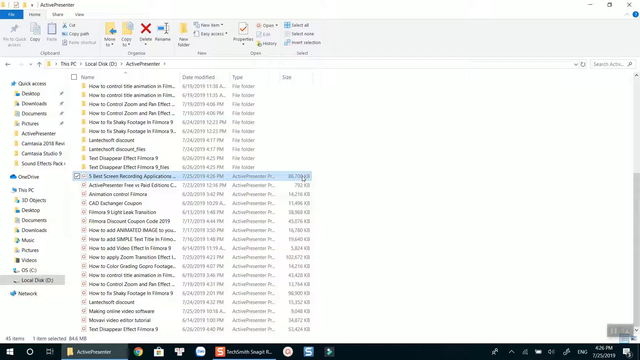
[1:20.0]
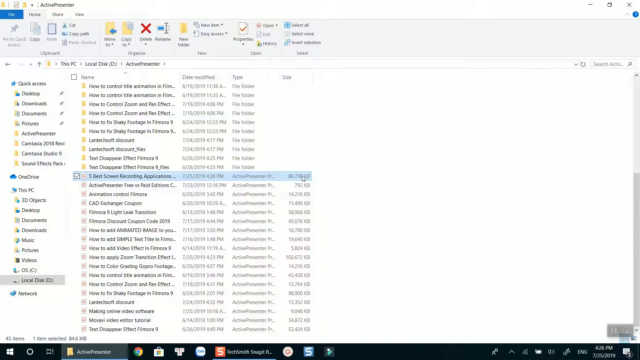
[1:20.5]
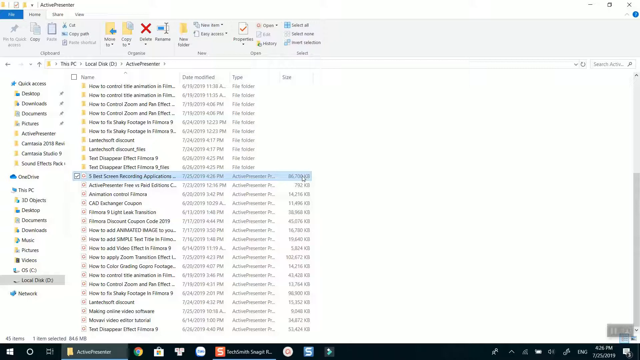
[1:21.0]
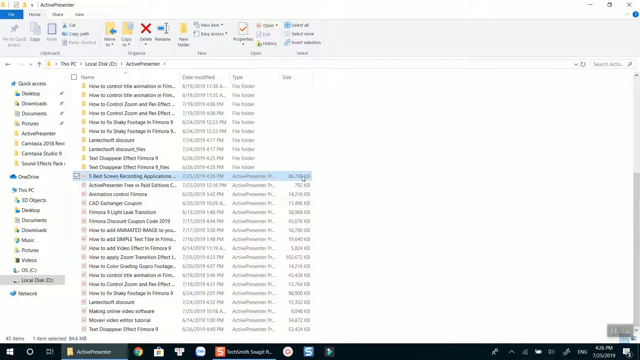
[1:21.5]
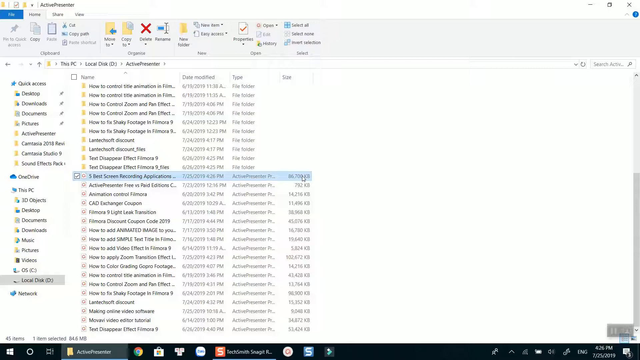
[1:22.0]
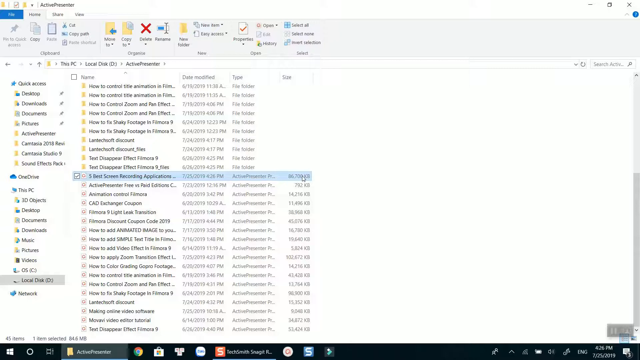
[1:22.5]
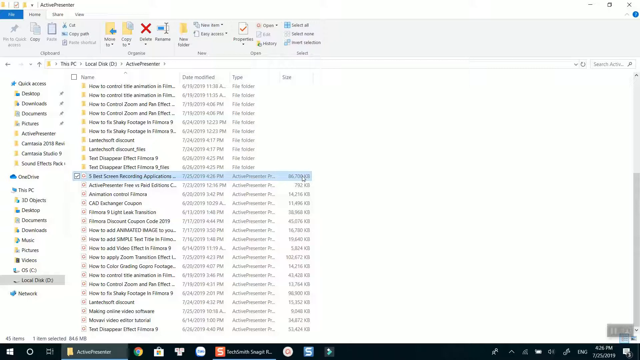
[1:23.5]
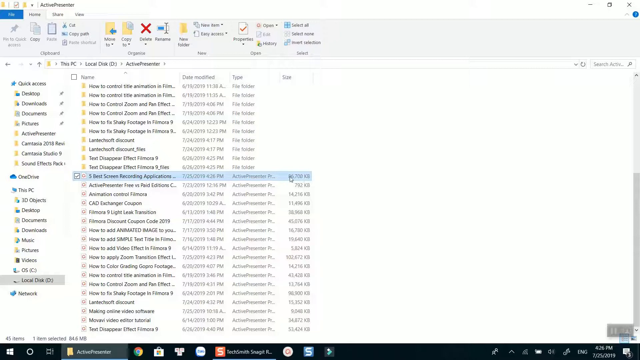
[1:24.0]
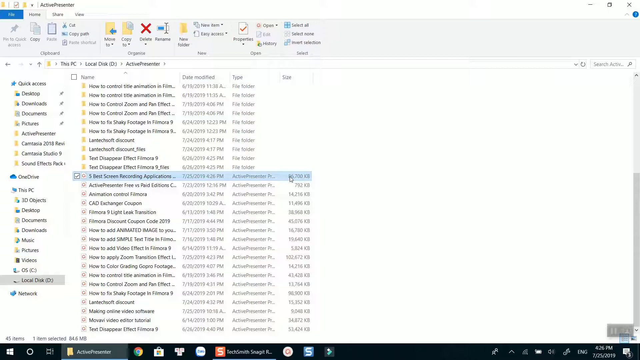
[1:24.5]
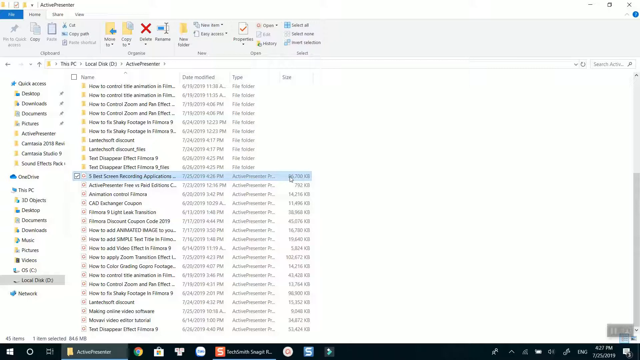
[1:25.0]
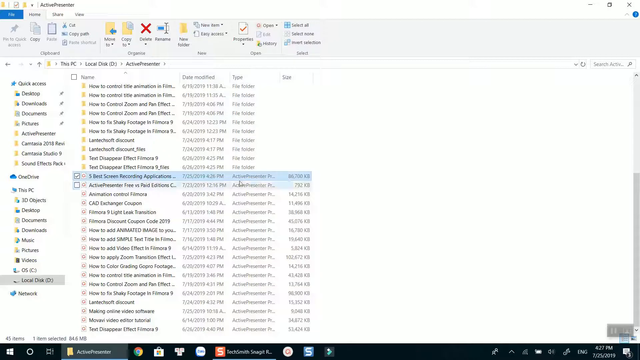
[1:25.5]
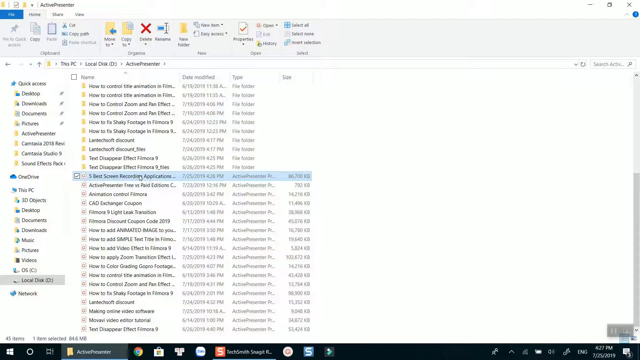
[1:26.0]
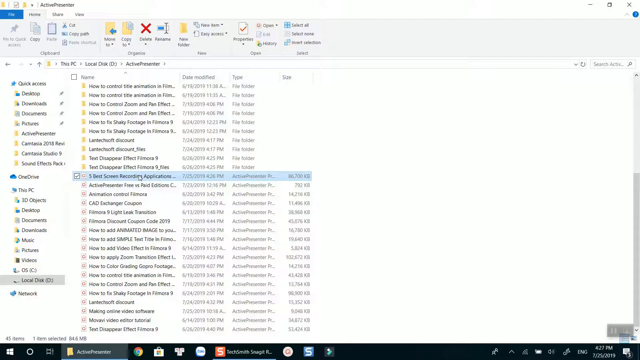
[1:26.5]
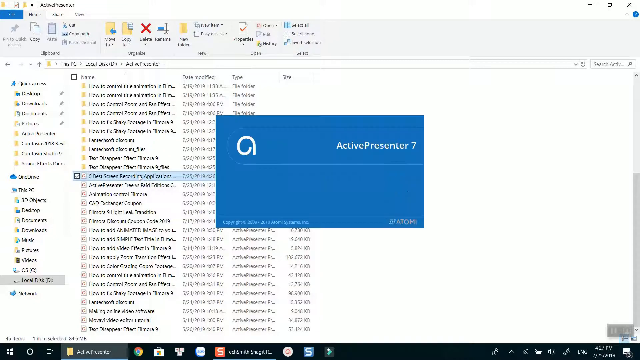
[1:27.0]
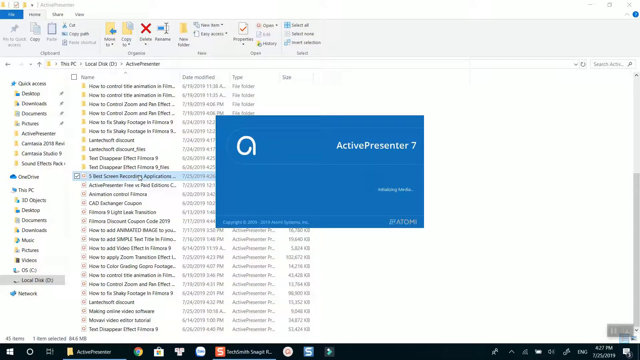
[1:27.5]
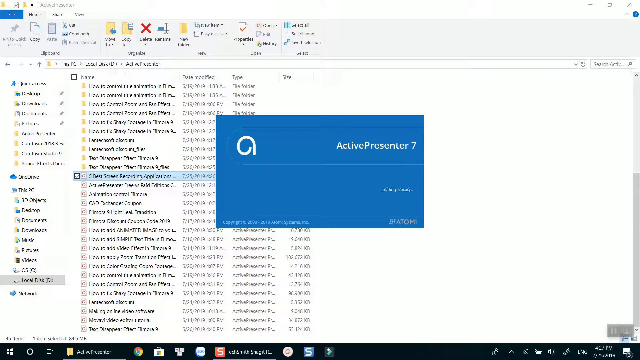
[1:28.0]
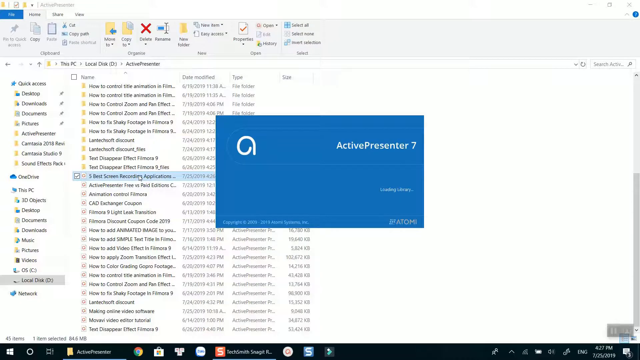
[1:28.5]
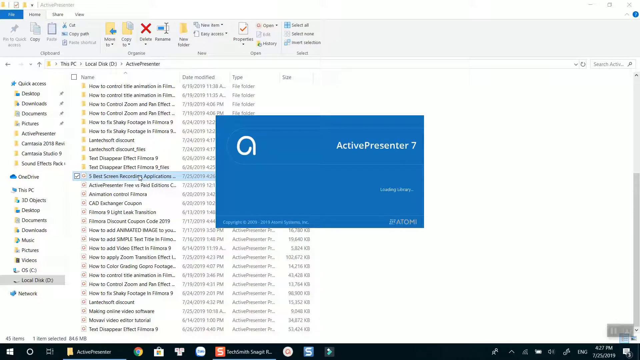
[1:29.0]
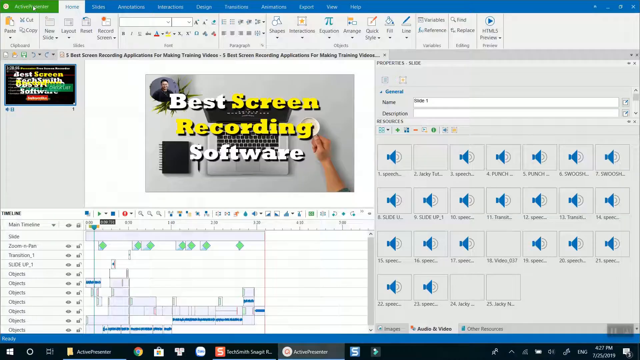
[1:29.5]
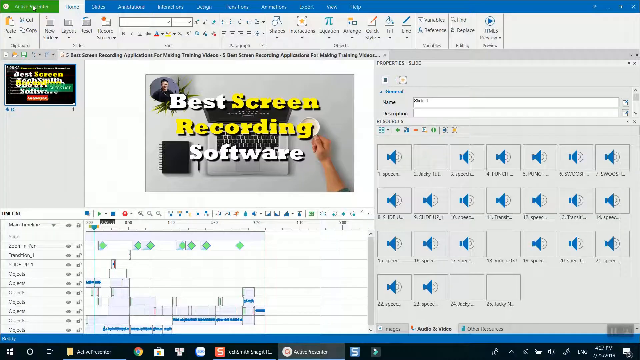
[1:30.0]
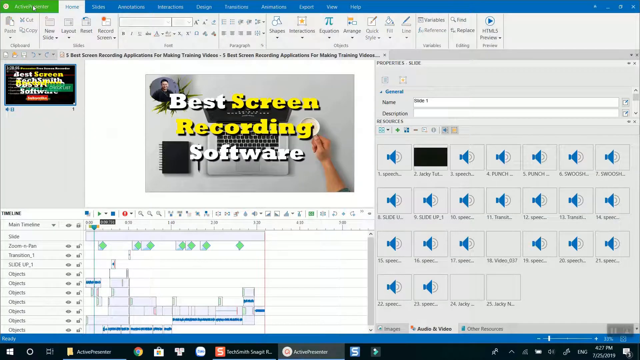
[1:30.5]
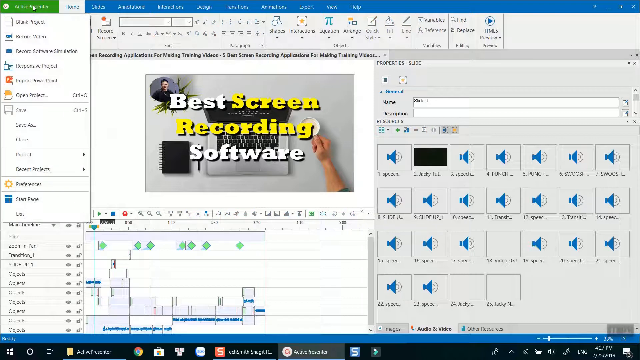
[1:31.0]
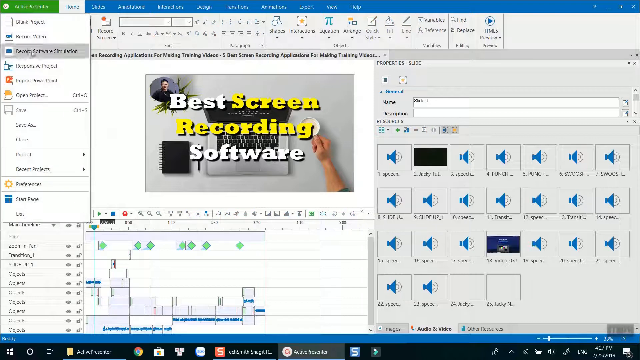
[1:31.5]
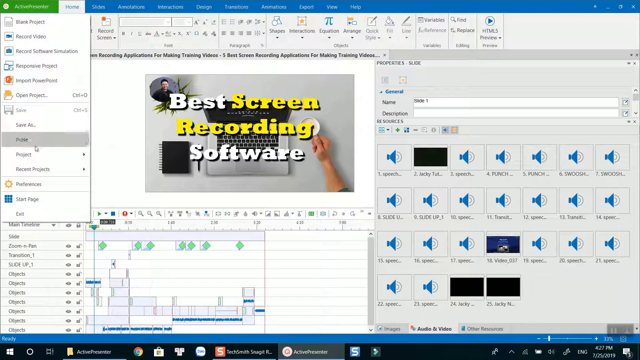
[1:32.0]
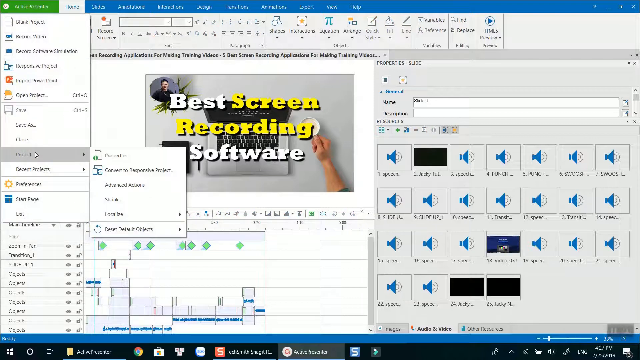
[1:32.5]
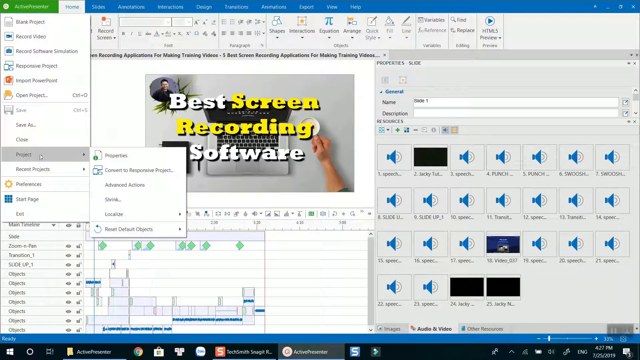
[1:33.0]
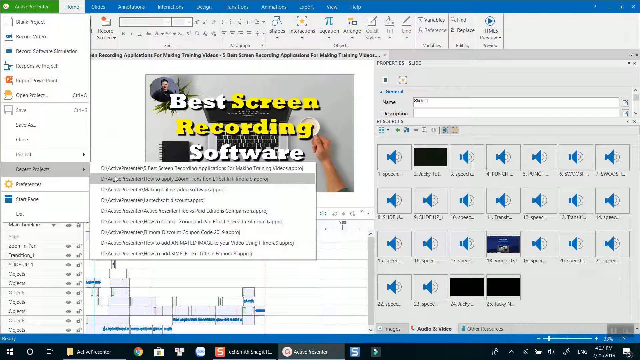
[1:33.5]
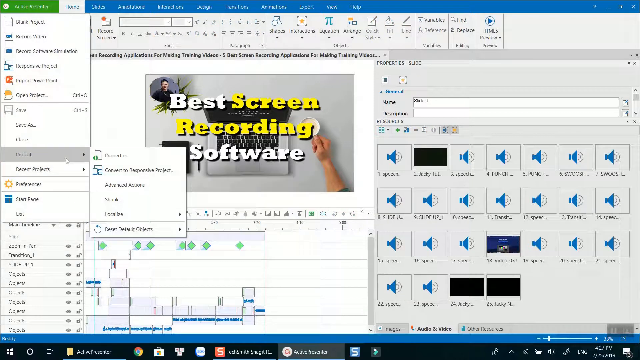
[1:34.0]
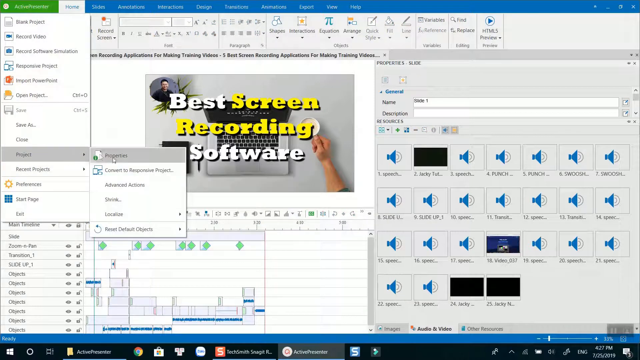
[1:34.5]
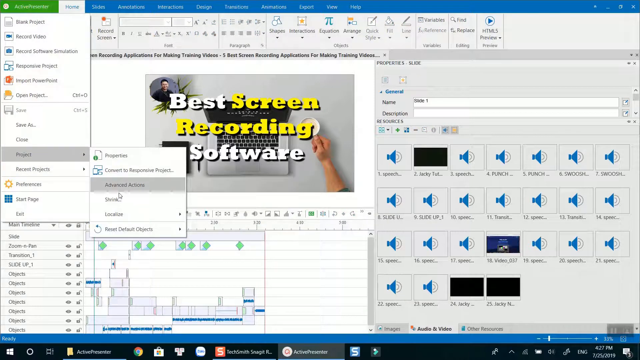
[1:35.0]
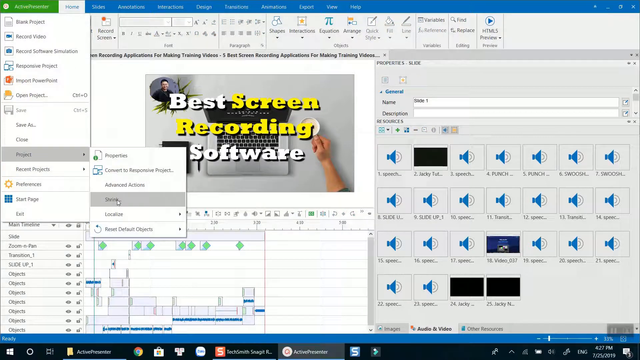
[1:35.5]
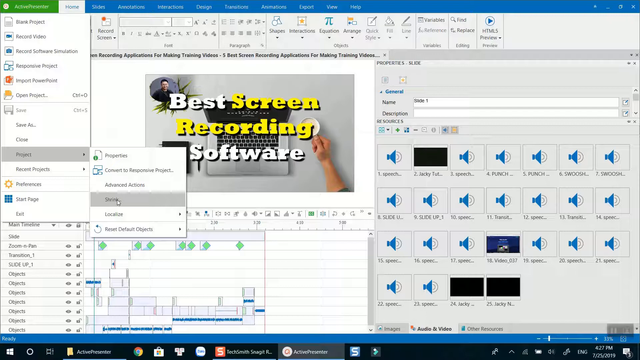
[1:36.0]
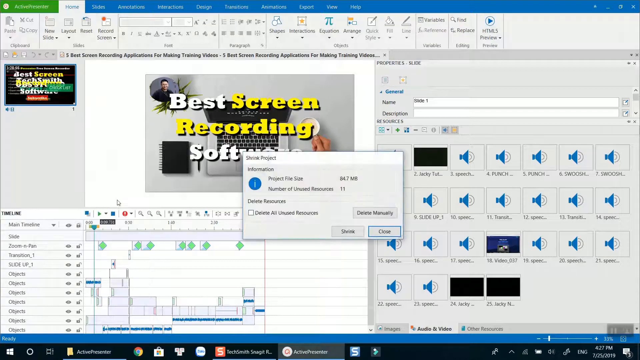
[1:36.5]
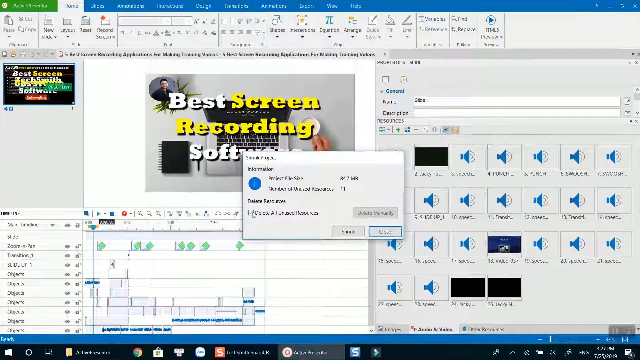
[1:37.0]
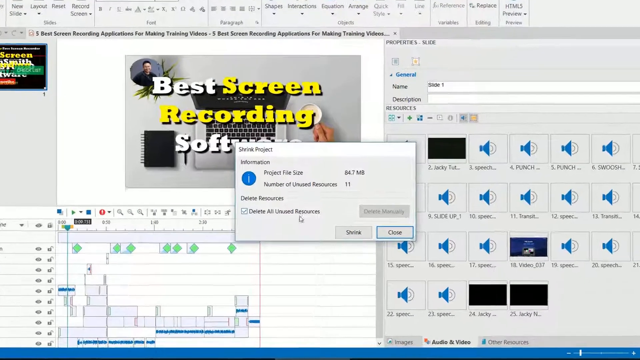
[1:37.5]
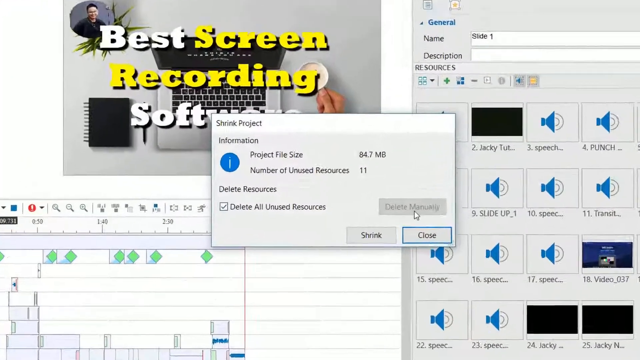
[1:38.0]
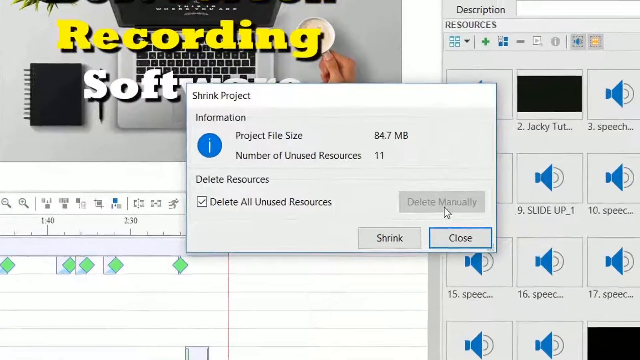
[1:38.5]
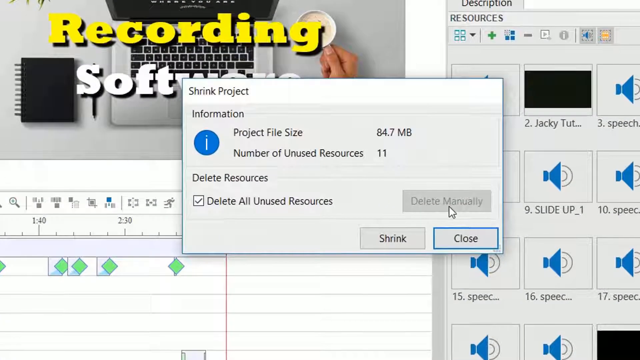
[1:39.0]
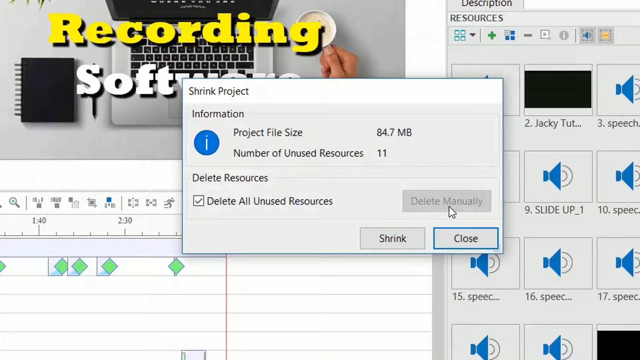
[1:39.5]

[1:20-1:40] The view returns to the file system on the local disk, where the person clicks on "five best screen recording applications," which opens Active Presenter 7. Back in the editing software, he selects Active Presenter at the top left, moves to Import PowerPoint without clicking it, moves down to Project, and clicks Shrink Project. A small window appears reading "shrink project," with "information" below it, "project file size, 84.7 megabyte," and a number of unused resources that looks like 11. There are options to delete resources, "delete all unused resources" and "delete manually," and buttons to shrink or close. He appears to click Shrink. A prompt then reads "shrink project, project will be saved and shrunk. This action and all previous actions cannot be undone." asking whether to proceed. It is unclear whether he selects yes or no.